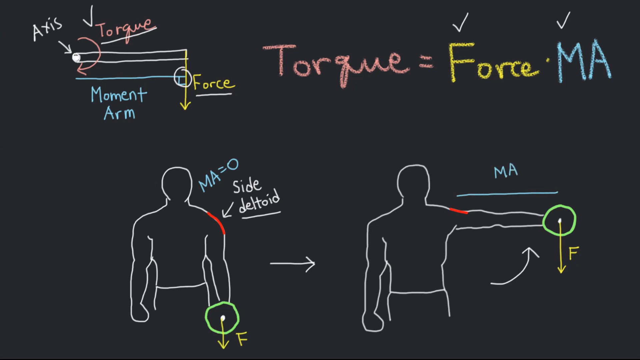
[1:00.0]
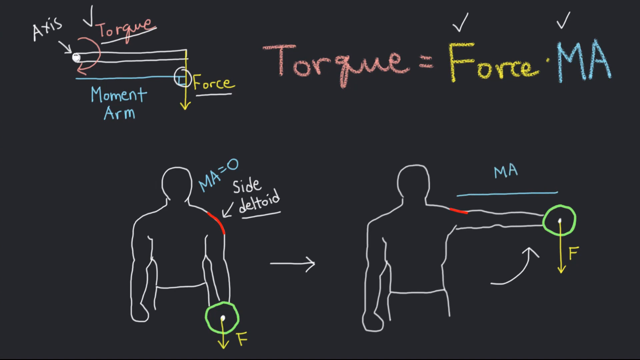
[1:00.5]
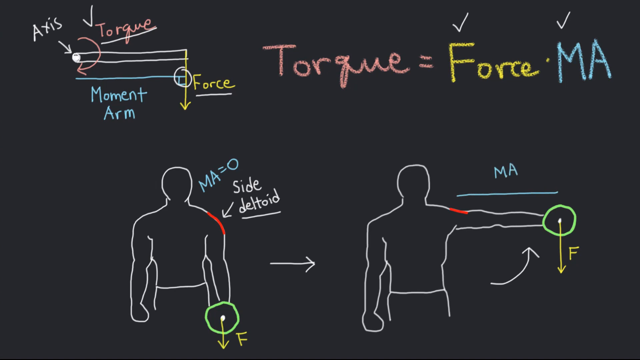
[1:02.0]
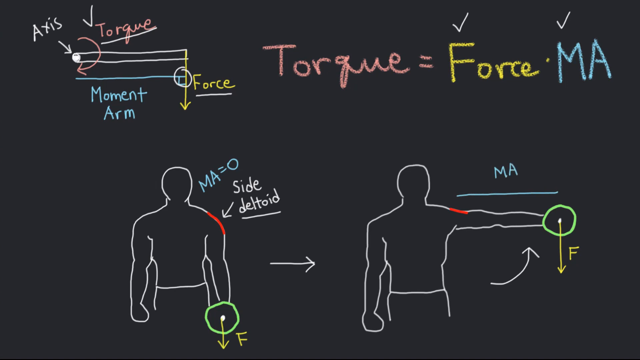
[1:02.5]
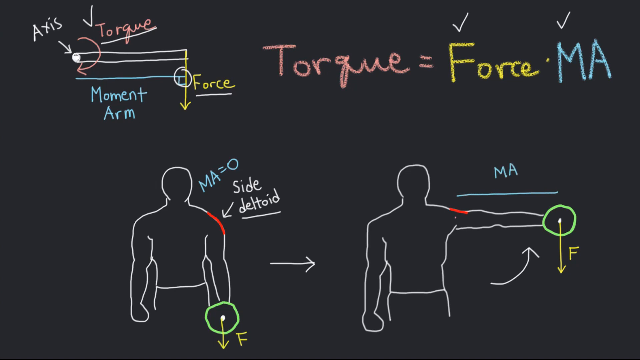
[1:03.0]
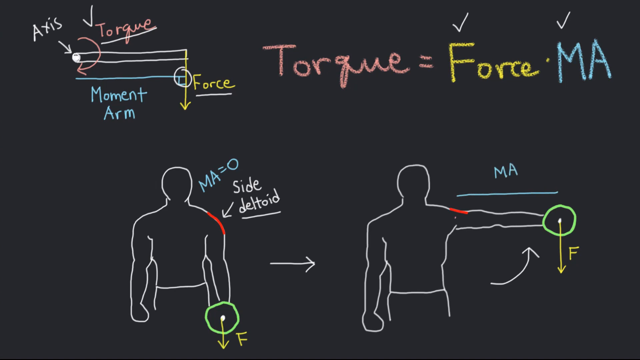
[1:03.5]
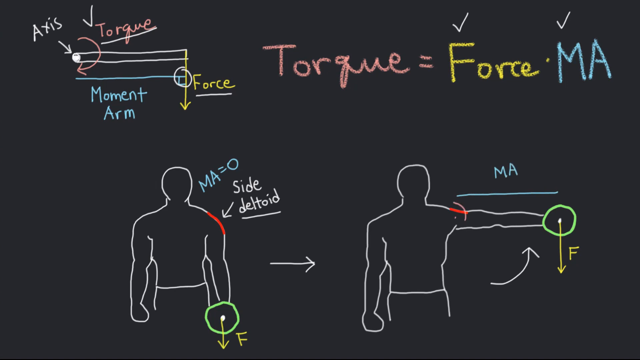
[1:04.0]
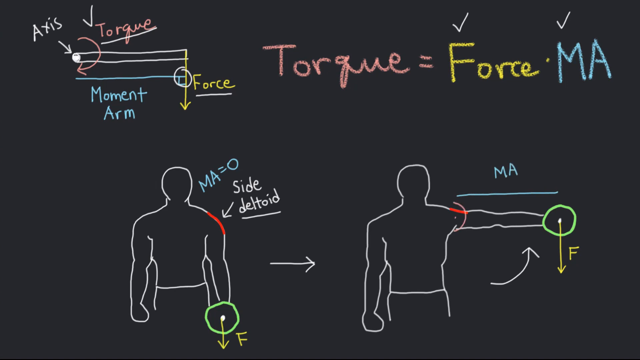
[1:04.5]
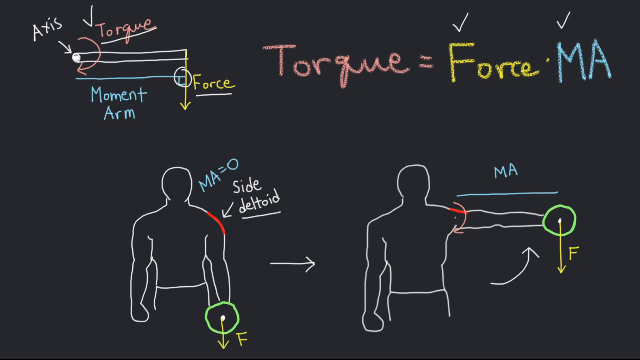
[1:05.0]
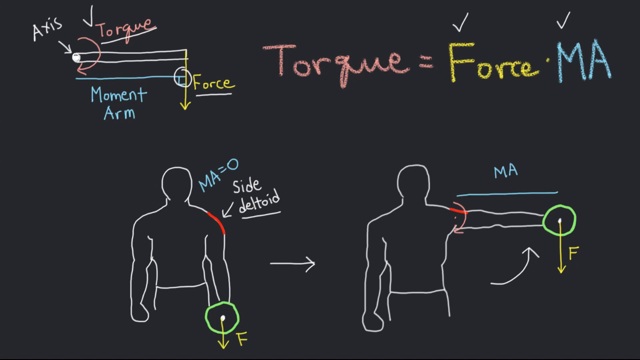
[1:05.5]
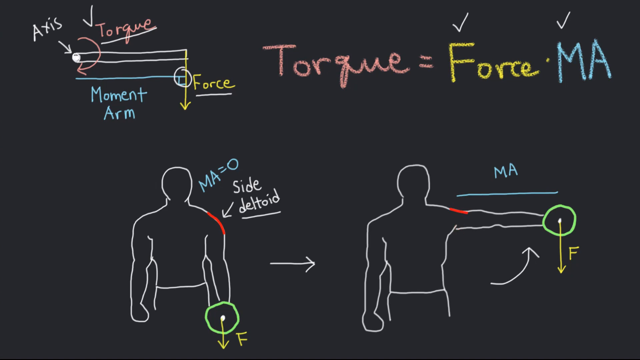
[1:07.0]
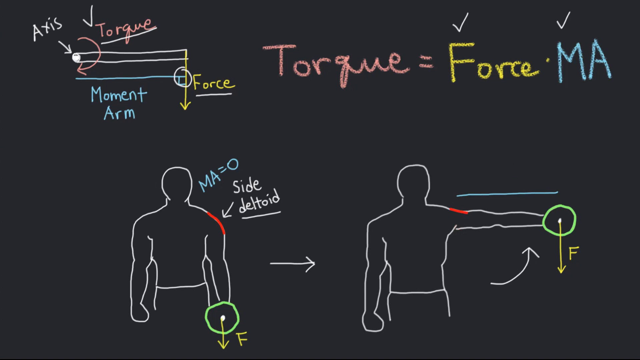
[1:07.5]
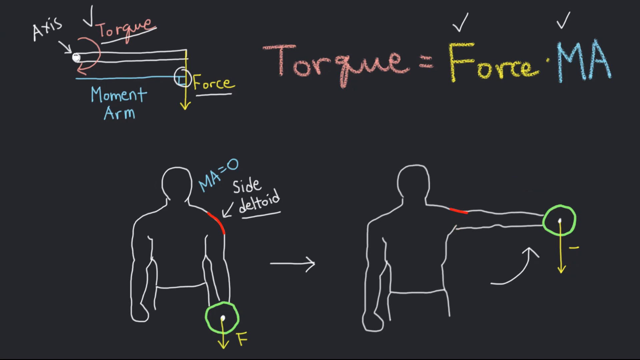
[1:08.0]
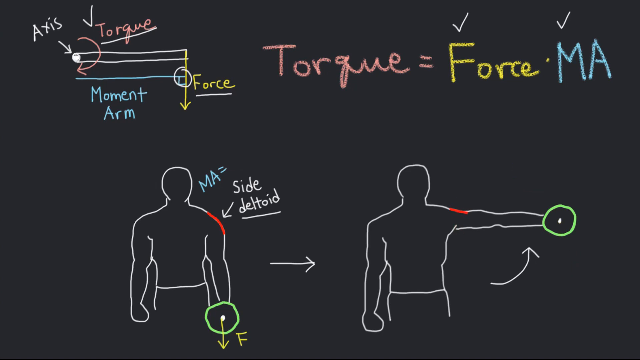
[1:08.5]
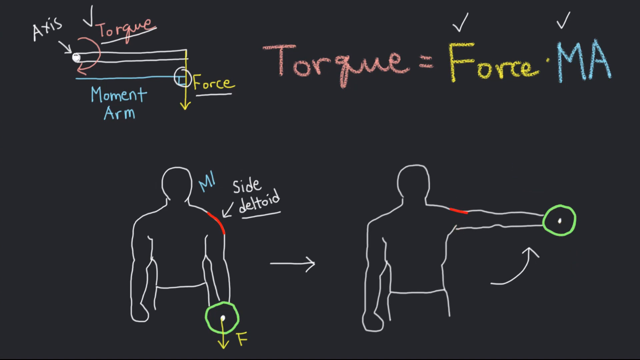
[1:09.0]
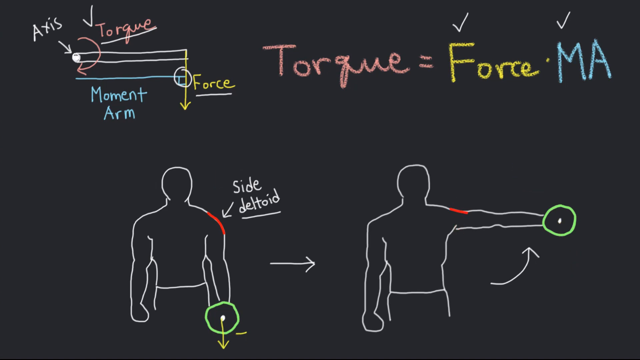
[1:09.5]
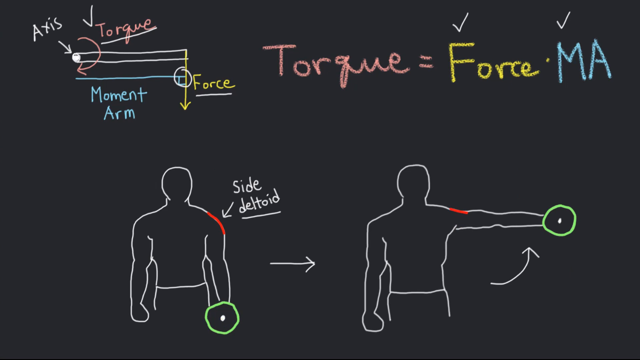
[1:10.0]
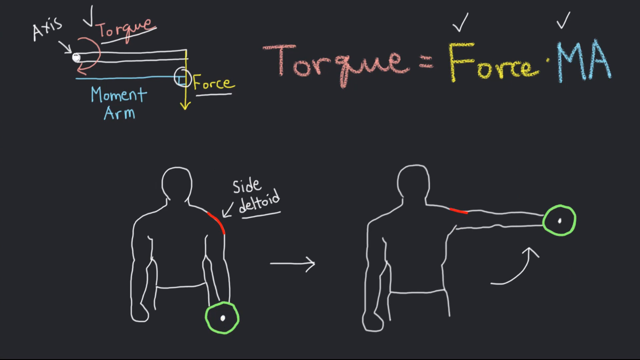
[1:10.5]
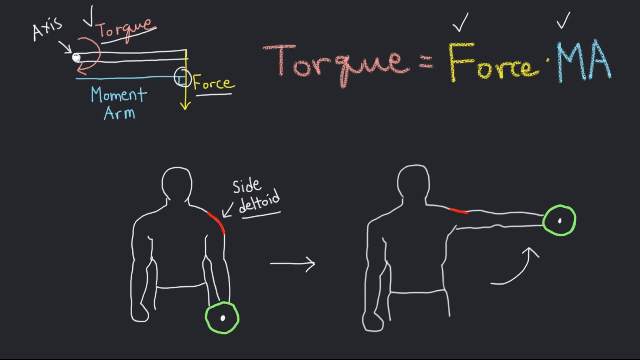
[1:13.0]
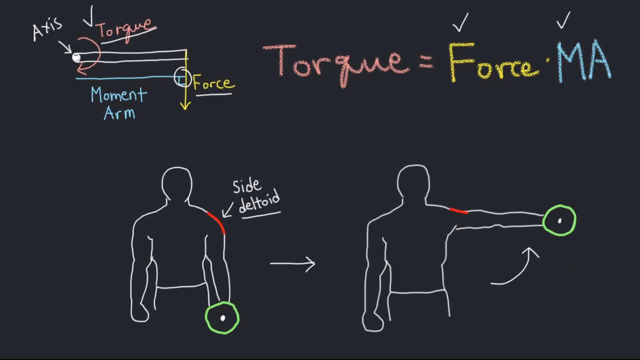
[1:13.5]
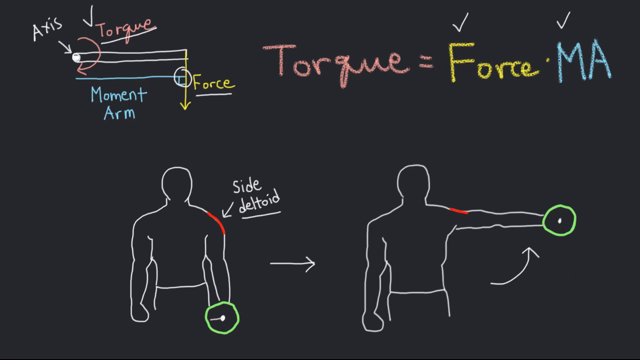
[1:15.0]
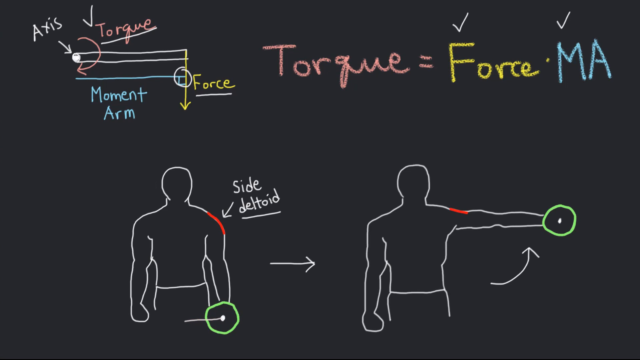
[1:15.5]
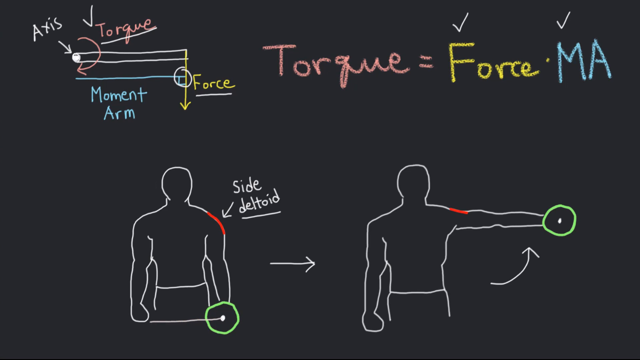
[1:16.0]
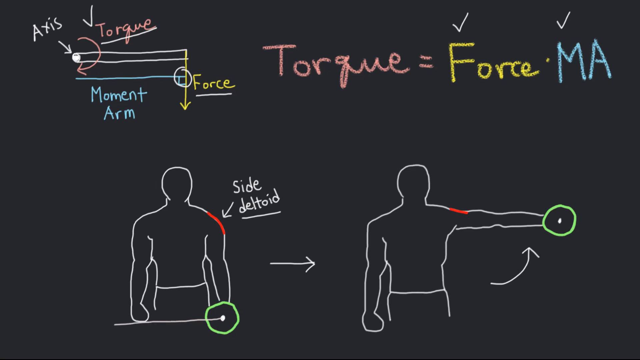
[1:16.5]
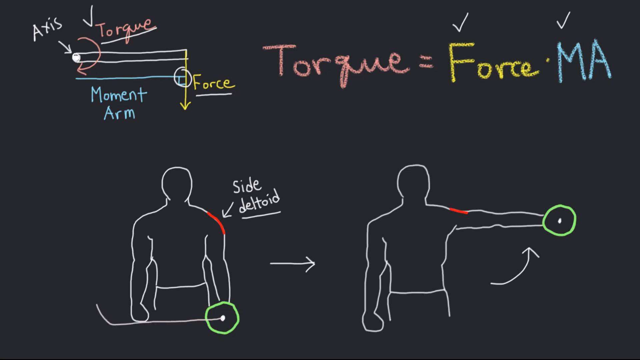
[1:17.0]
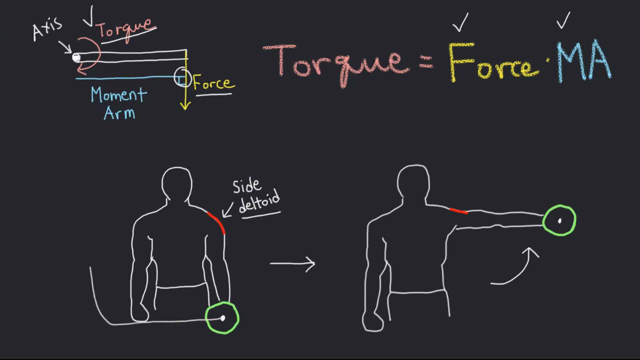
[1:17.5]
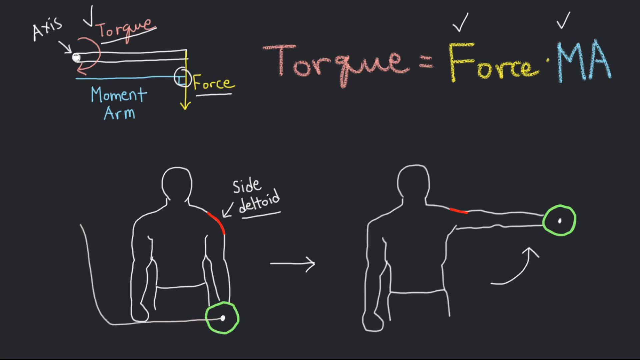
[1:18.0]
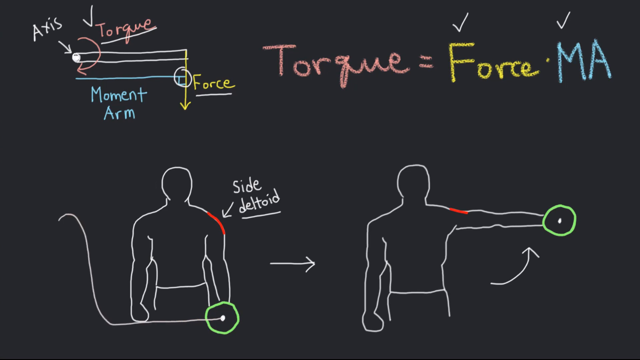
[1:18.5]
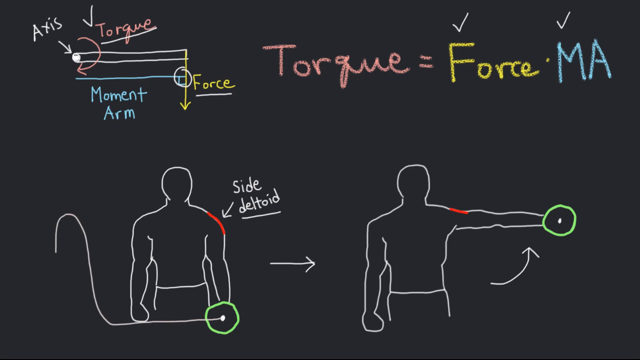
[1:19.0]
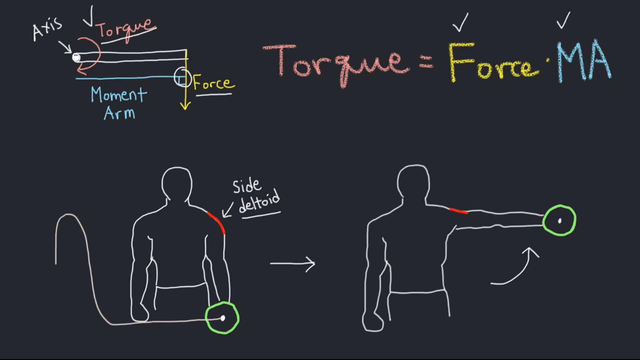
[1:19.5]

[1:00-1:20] The blackboard shows the two figures at the bottom. The figure on the right has a weight in his arm with an arrow pointing downwards and an F, and a blue formula above his left arm with the letters MA. An arrow is kind of drawn around his side deltoid. Then the MA is erased, along with the downward arrow and the F, and the "MA equals zero" above the left figure is erased too. The scene is largely erasing. Afterwards, a kind of curve diagram is drawn at the far left of the bottom.